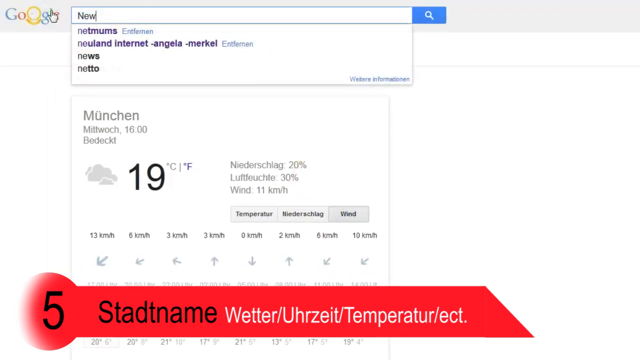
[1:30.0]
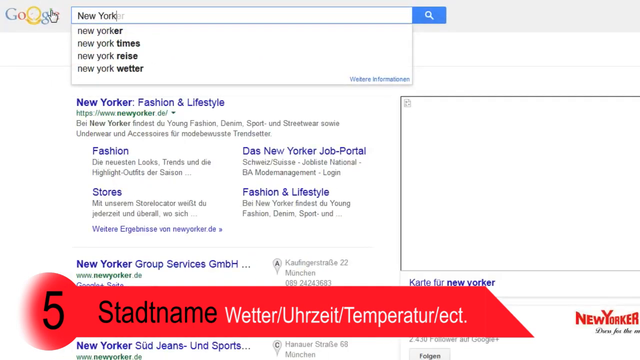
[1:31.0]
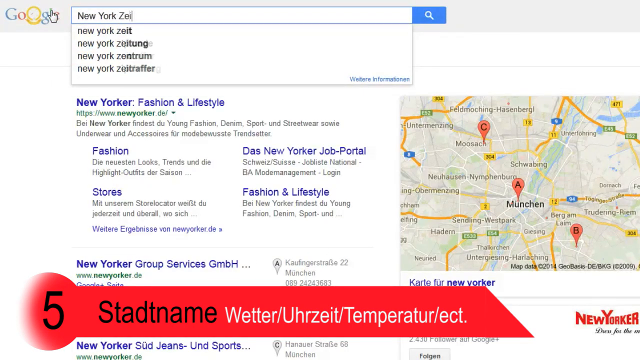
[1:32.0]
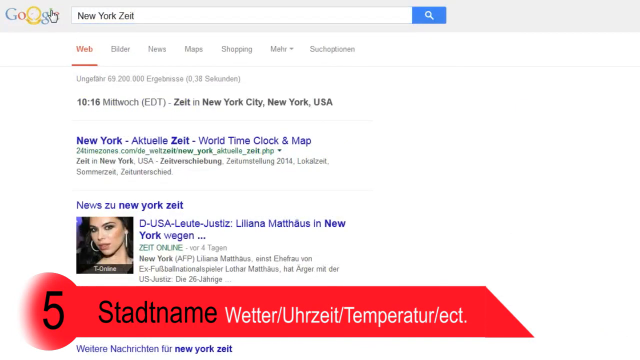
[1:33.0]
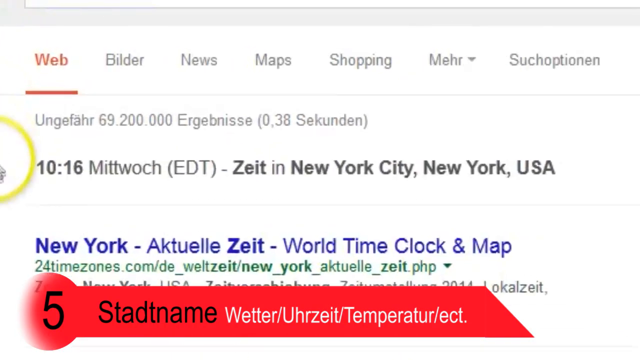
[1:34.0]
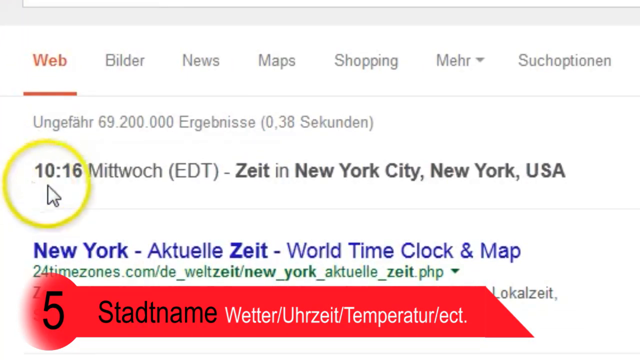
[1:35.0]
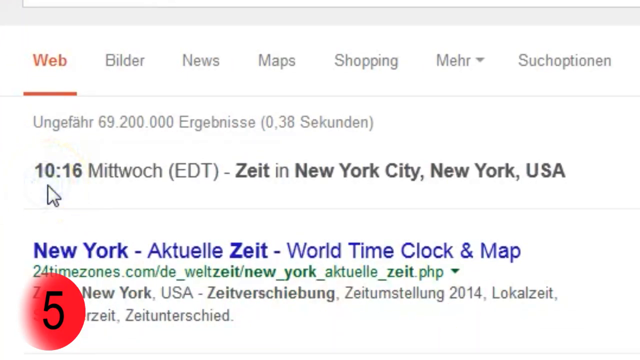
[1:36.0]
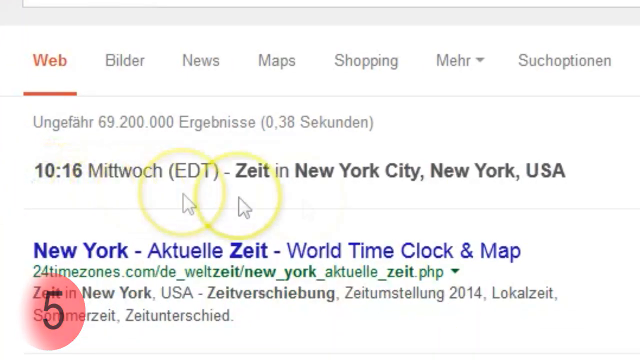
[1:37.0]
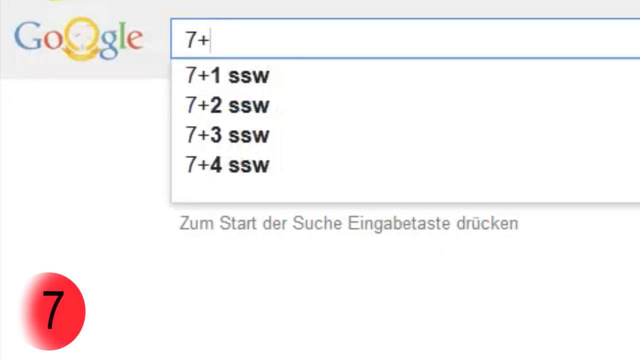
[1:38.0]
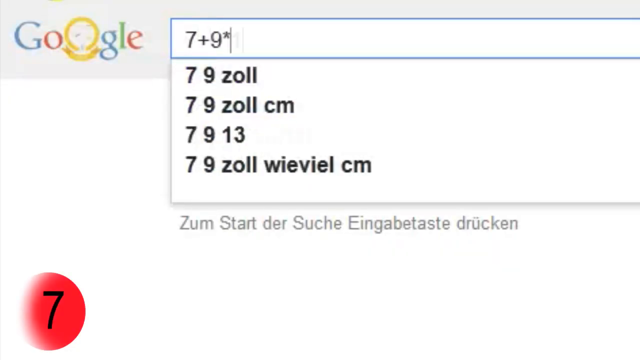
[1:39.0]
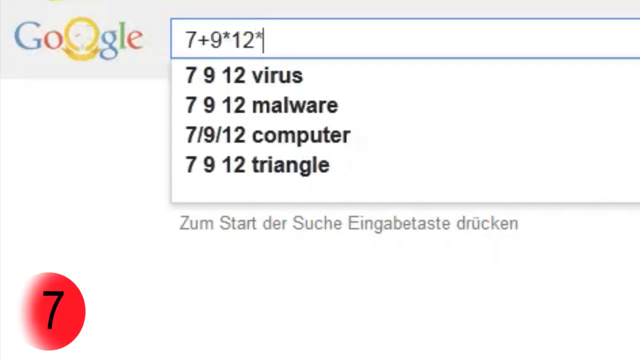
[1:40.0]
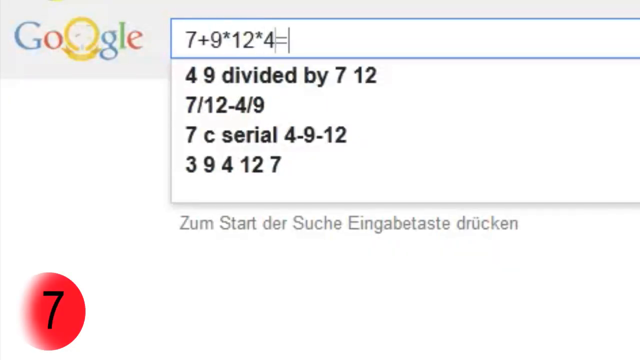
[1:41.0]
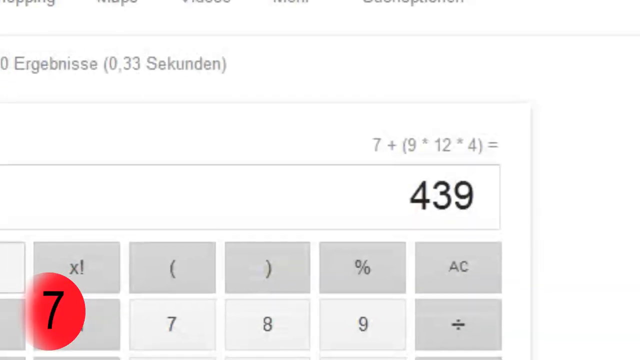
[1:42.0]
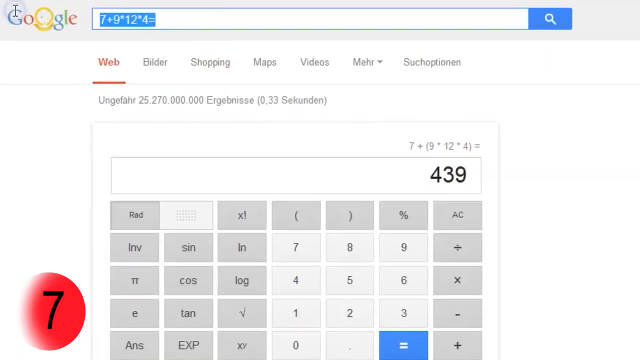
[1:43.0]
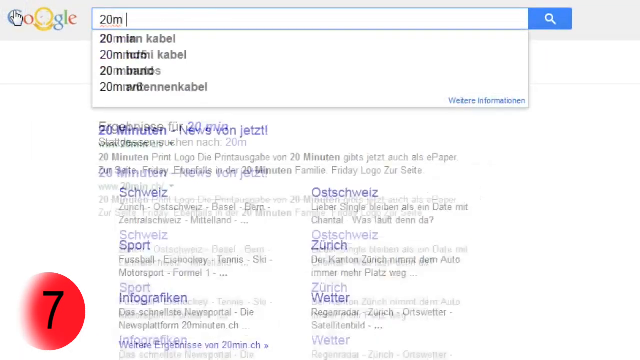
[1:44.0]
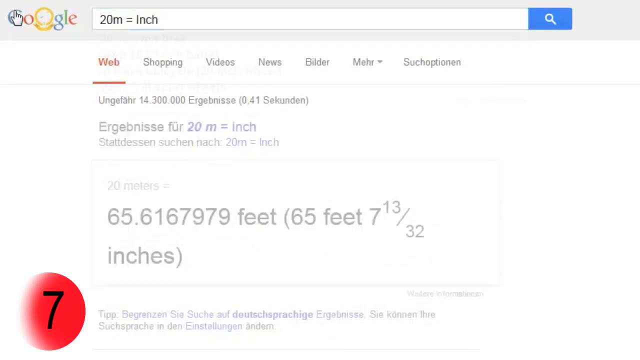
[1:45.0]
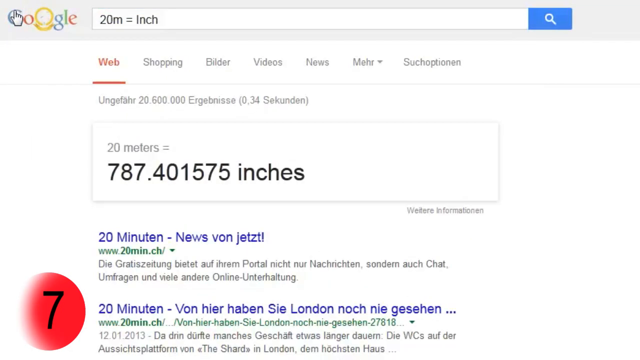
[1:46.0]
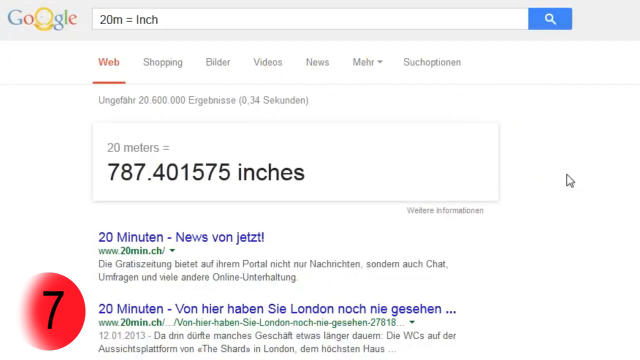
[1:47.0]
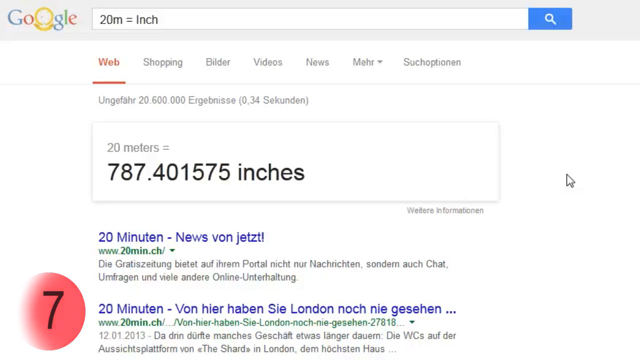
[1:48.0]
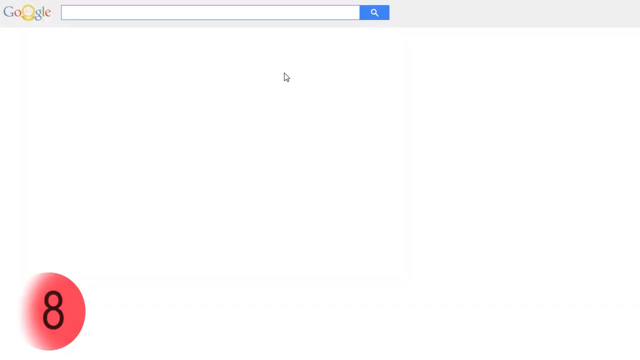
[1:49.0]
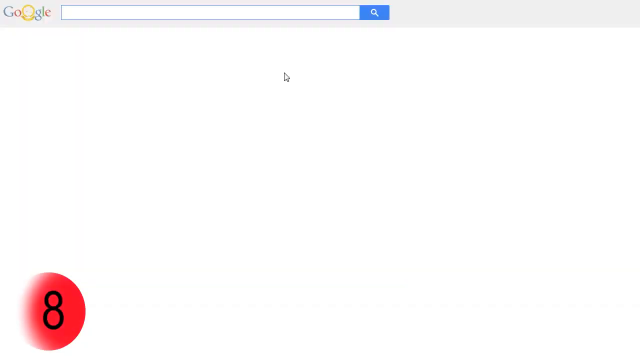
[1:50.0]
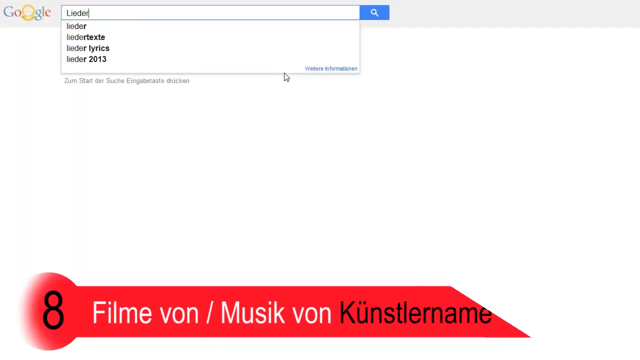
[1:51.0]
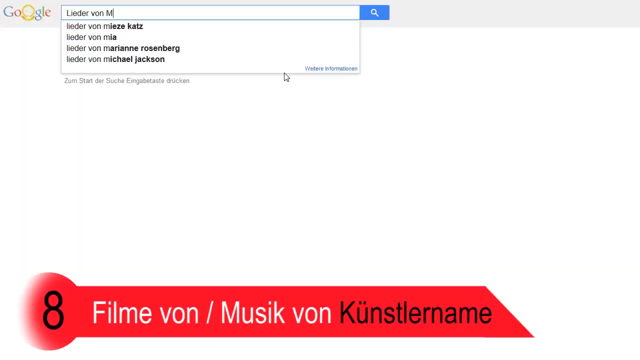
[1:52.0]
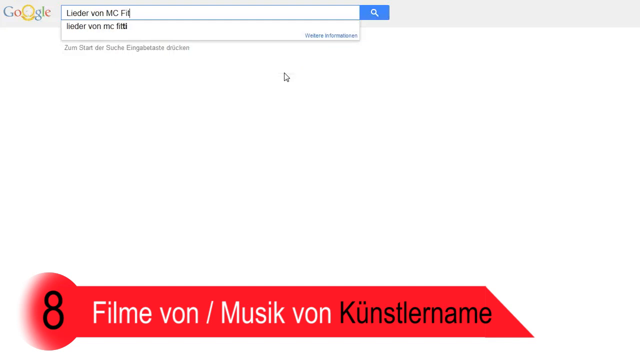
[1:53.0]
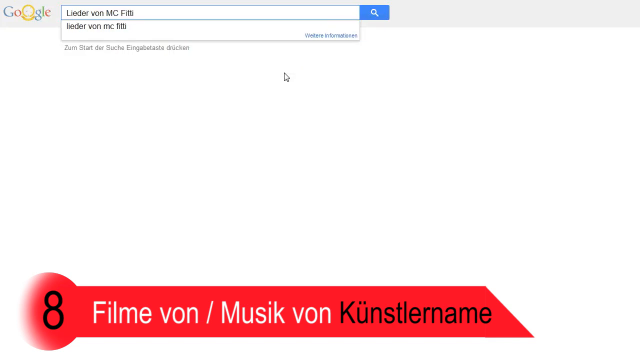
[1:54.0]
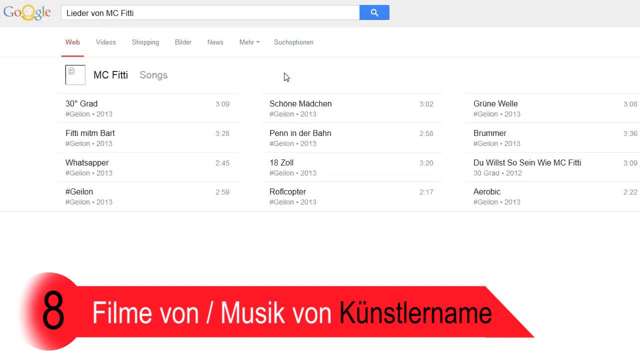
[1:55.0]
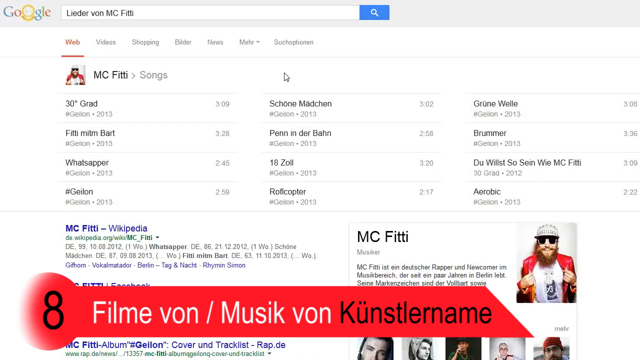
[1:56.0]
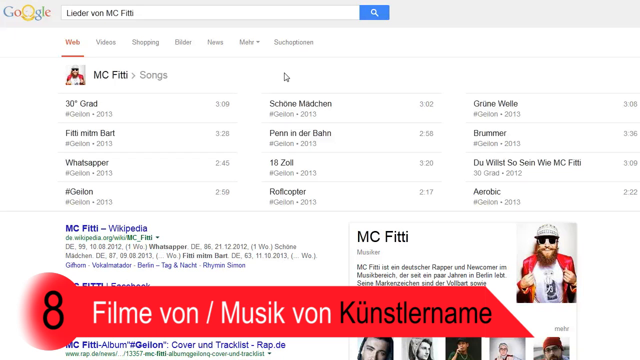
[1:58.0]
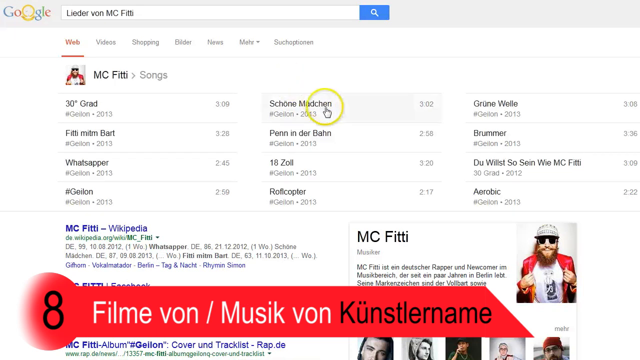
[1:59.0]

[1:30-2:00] The person recording types "New York" and a word in German into the search bar of the Google homepage. After pressing enter, information appears along with multiple search results for a world time clock and map. They zoom in on the time stated for New York City, New York, USA, click on the time, and drag the mouse further away. They then open a new Google search tab, zoom in closely on the search bar, and type in "7 + 9 × 12 × 4 =". After pressing enter, a calculator function pops up showing the equation and the result, 439. They delete the search and type in "20 meters = inch", and the answer appears as 20 meters = 787.401575 inches. In a new tab, they type in the name MC Fitti along with words in German. Multiple songs by the artist appear across the top of the screen, followed by Wikipedia information and Facebook. The person clicks on one song.